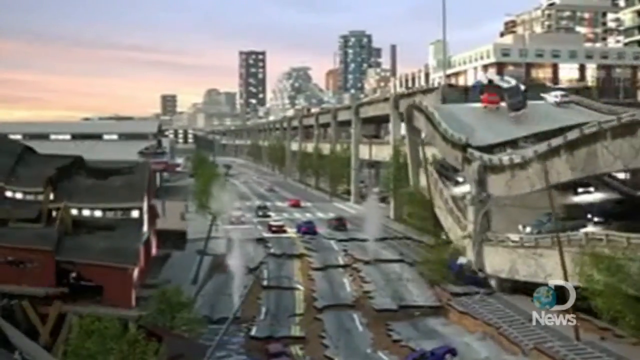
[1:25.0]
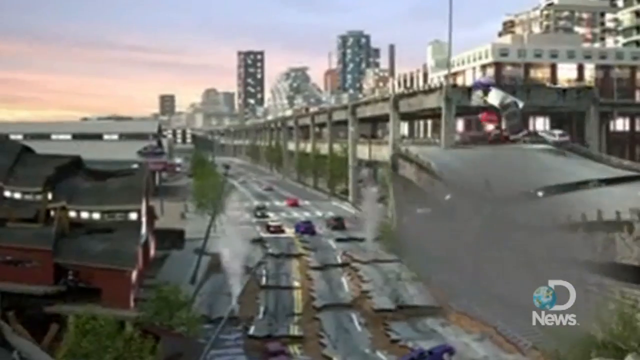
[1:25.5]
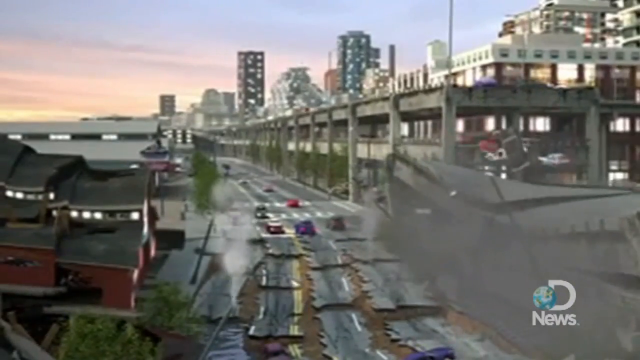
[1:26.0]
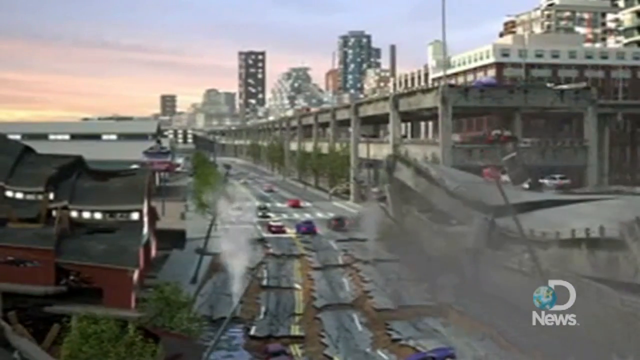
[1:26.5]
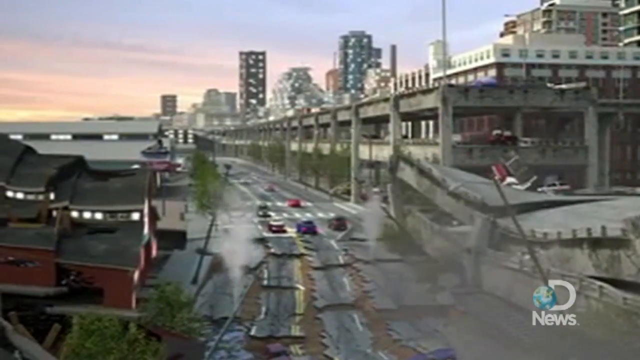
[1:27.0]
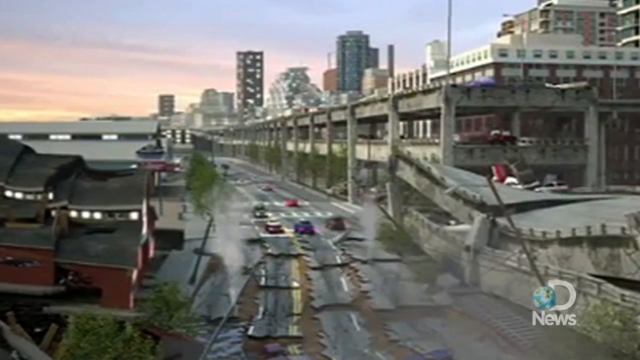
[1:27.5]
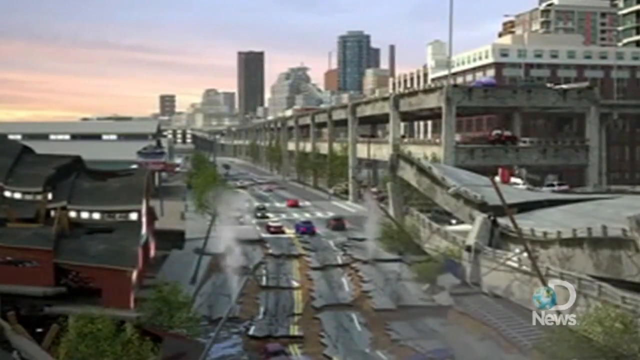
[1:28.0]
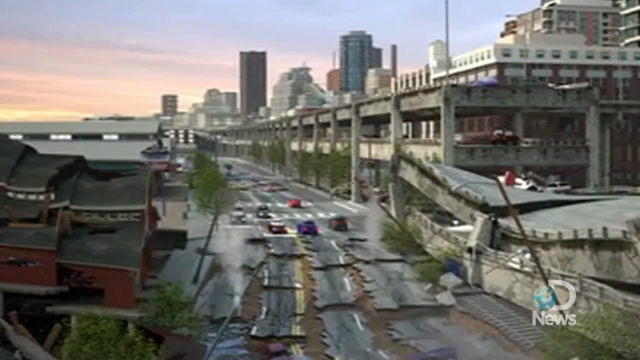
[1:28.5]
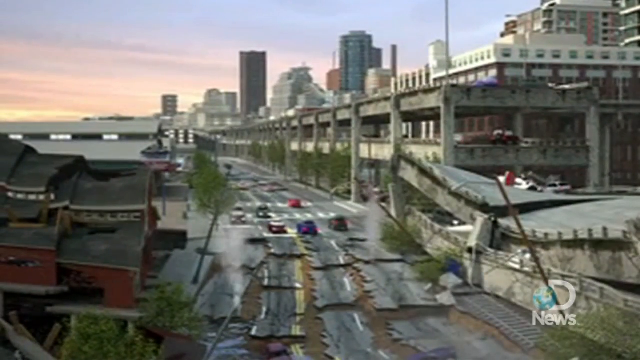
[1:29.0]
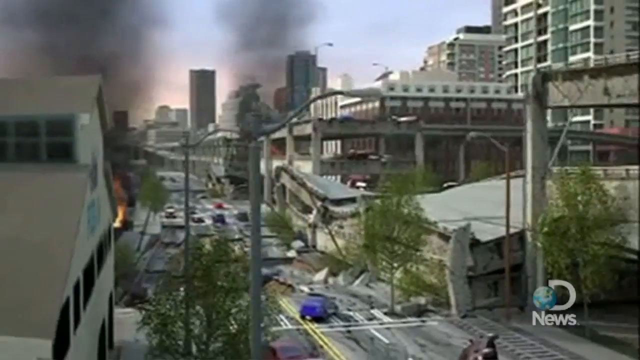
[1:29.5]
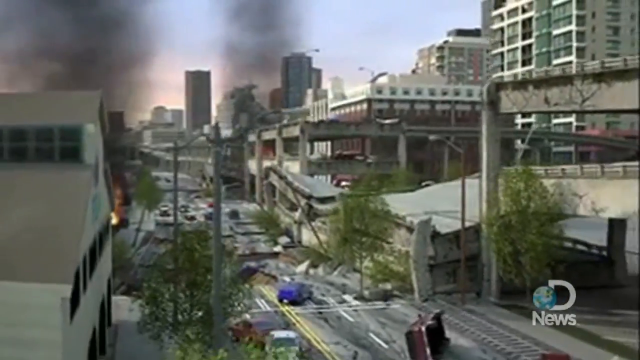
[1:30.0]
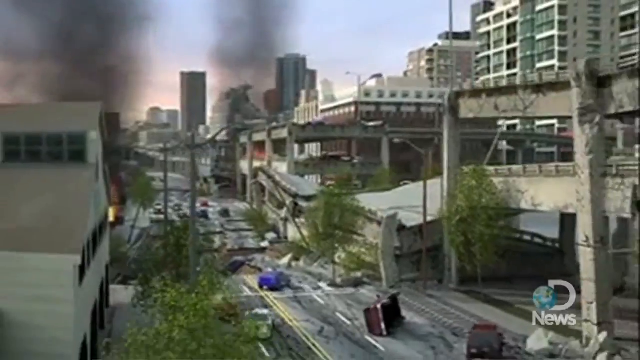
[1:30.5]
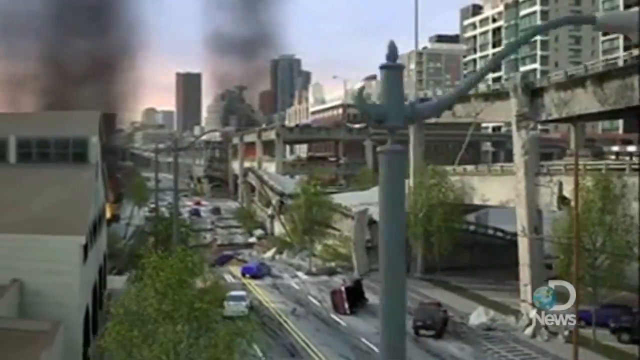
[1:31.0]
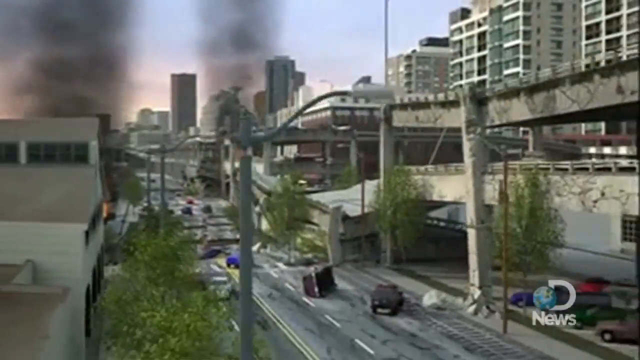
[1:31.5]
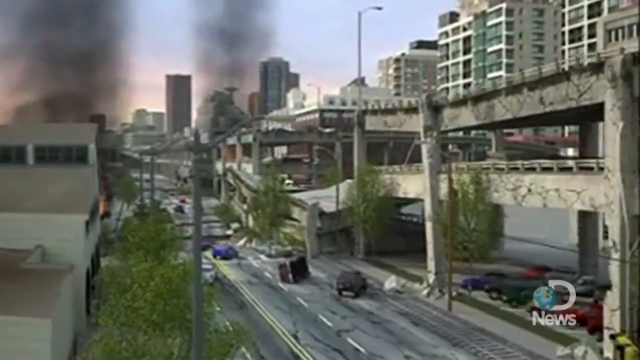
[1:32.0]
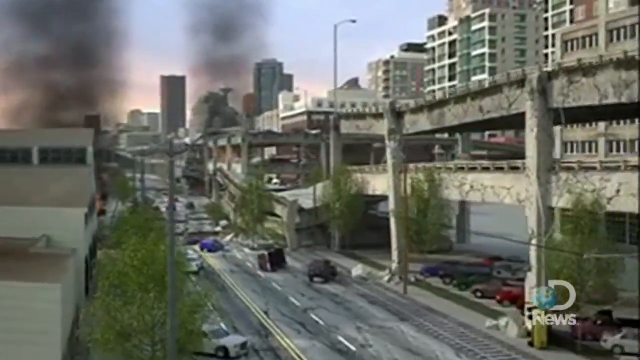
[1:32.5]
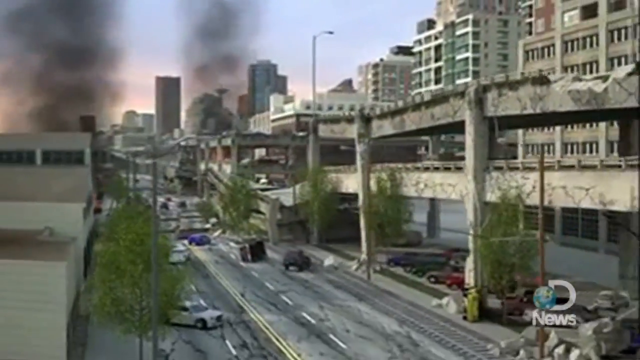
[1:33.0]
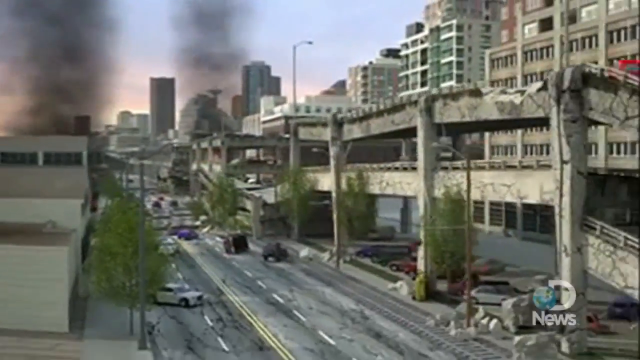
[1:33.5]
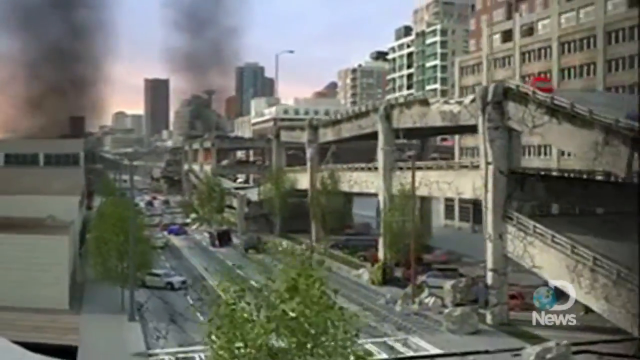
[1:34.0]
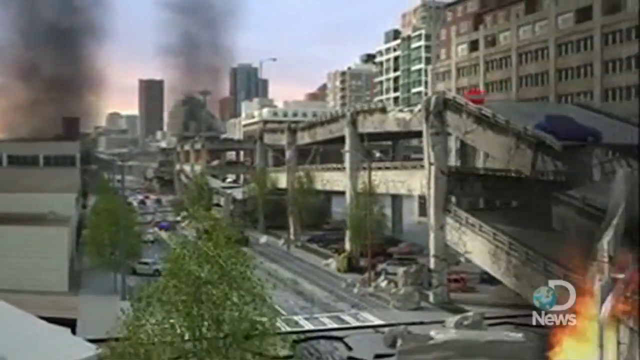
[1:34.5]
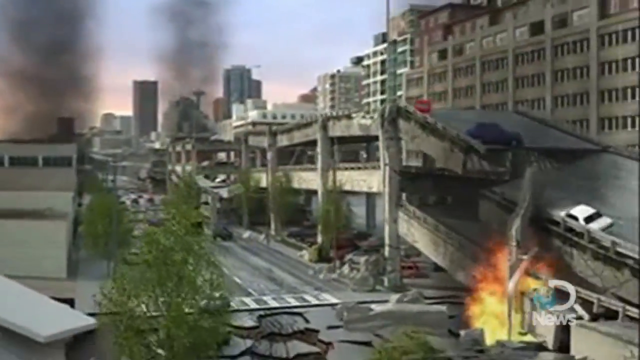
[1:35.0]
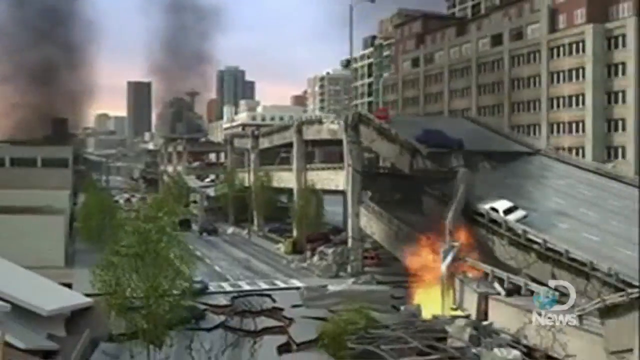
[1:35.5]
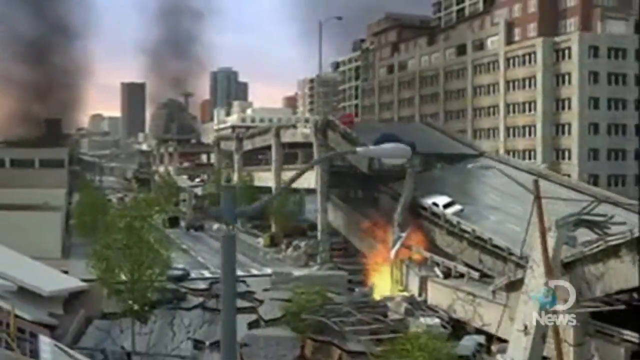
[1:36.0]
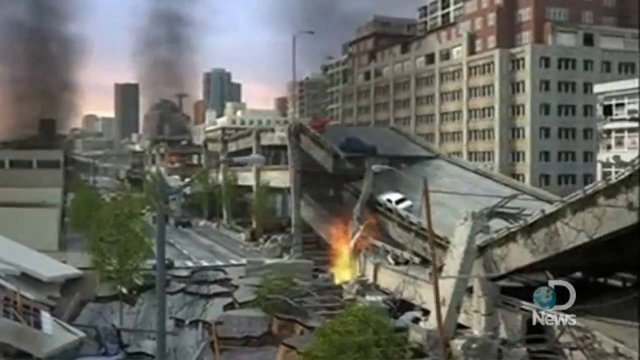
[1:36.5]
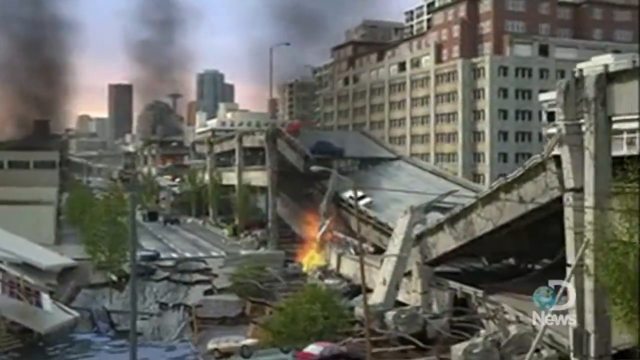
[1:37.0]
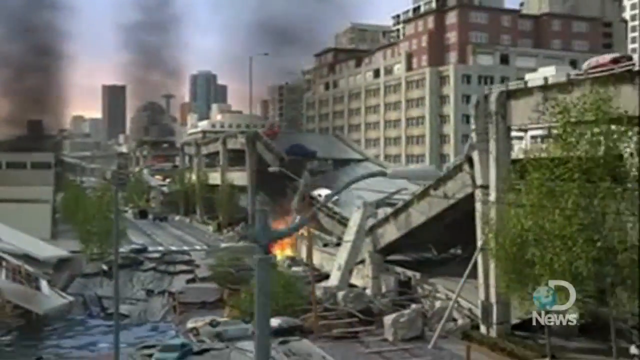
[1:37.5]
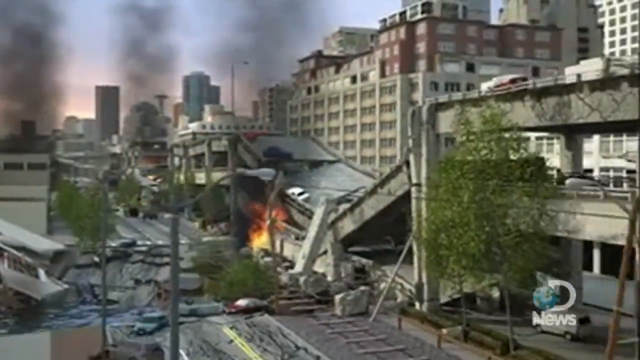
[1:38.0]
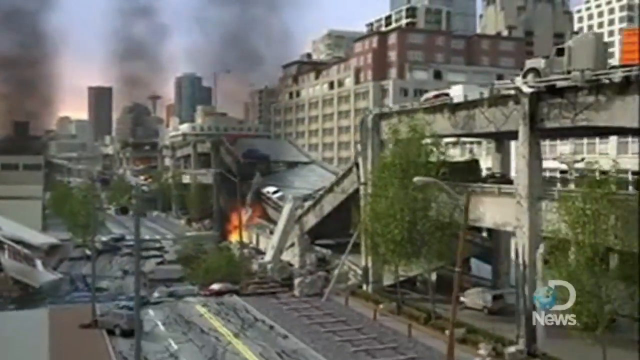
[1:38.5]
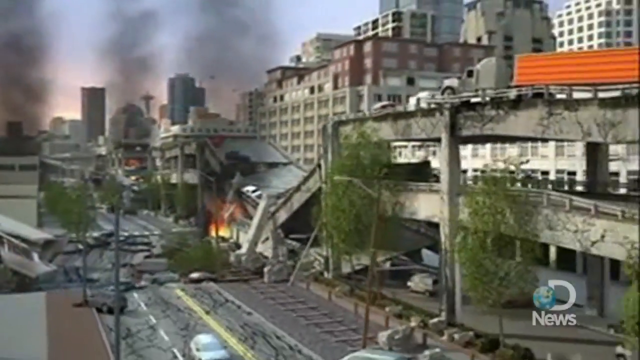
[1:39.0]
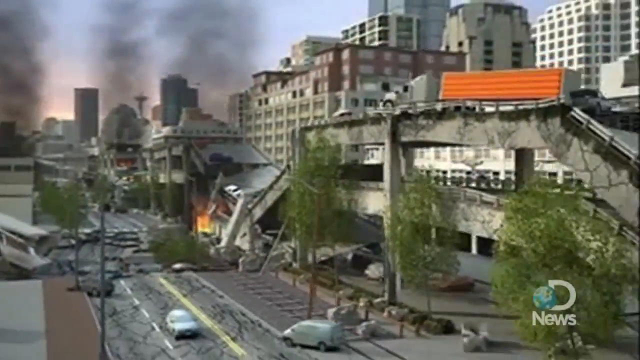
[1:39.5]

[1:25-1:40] The animation of the Pacific Northwest megaquake shows the double-decker highway and, to its left, a highway that is just one level. The computer-generated animation shows total devastation of the highways and the cars, and fires break out. The highways are completely crumbled. The top layer of the double-decker highway falls on the layer beneath it. The single-layer highway, a four-lane highway with two lanes on each side, buckles and its asphalt falls into the water, taking the cars on it with it. There is smoke and fire, and the highways are no longer anything close to usable.